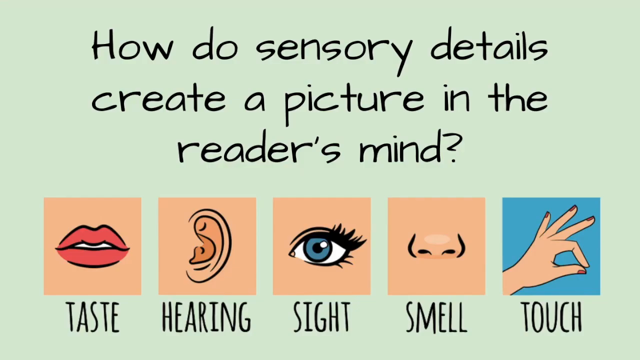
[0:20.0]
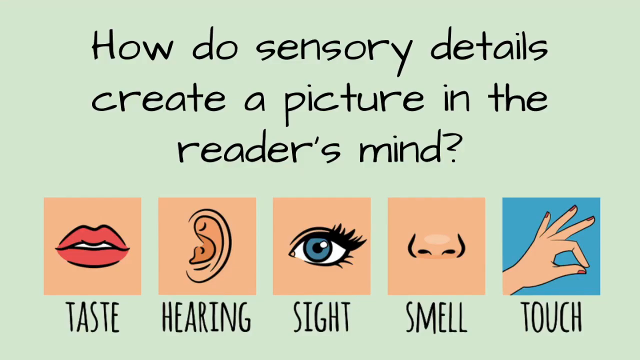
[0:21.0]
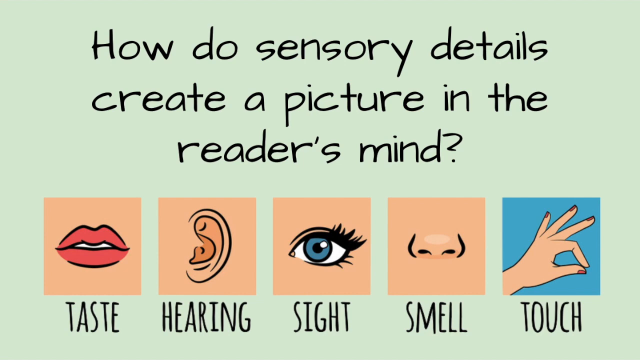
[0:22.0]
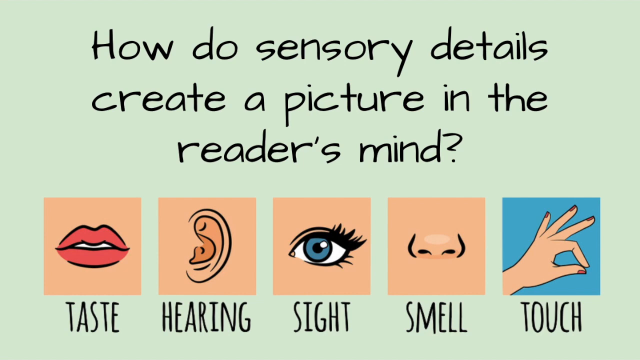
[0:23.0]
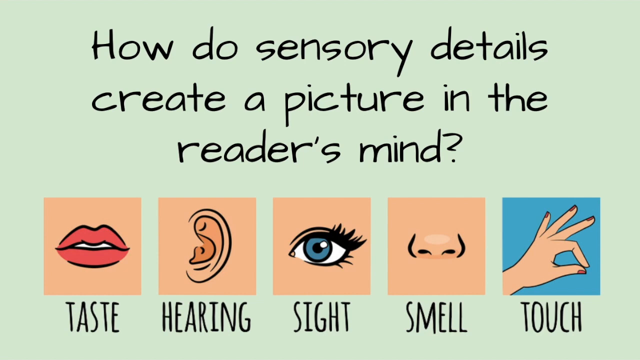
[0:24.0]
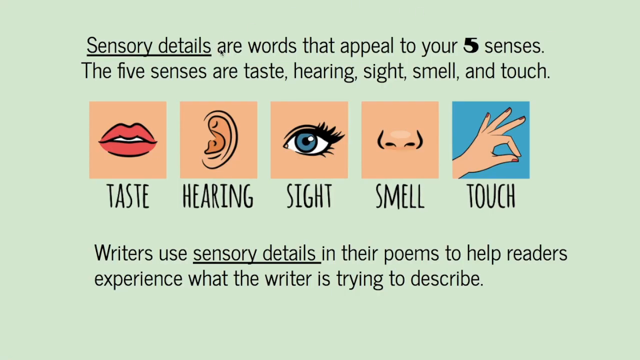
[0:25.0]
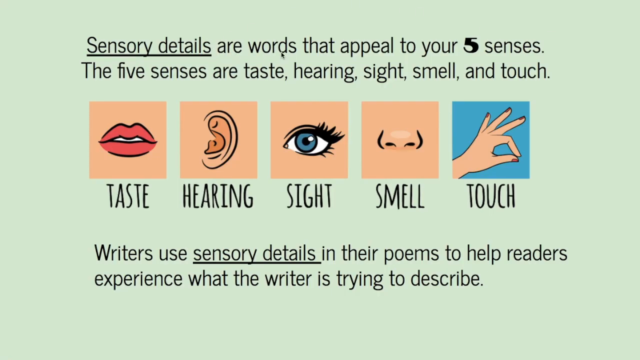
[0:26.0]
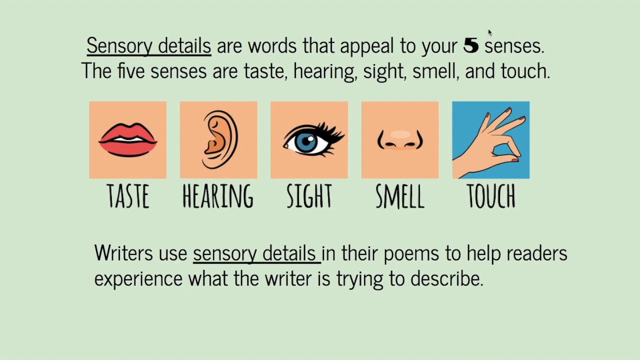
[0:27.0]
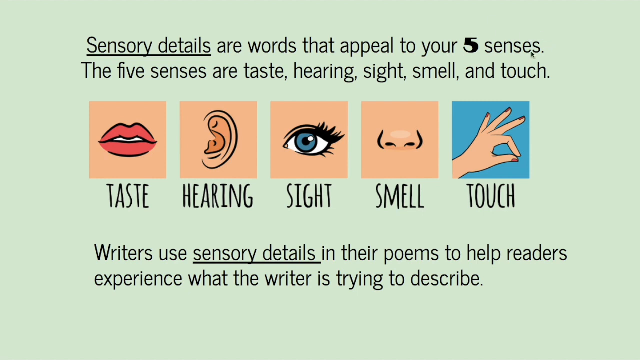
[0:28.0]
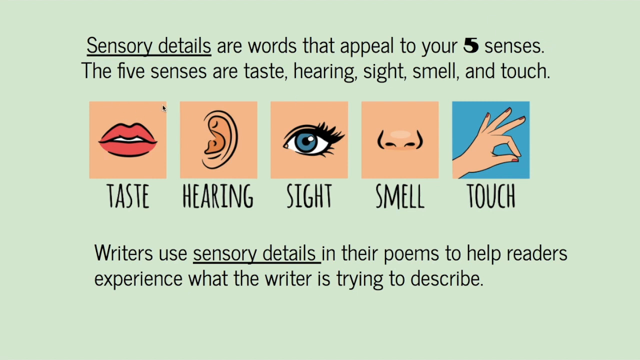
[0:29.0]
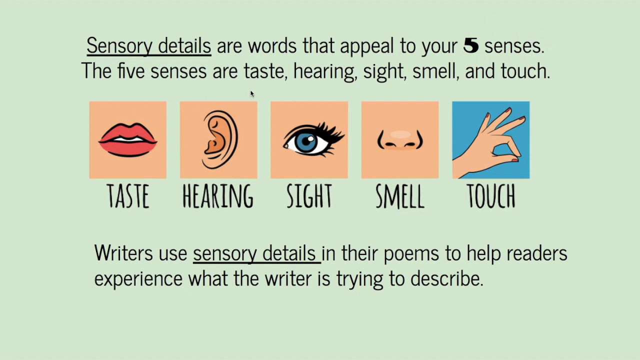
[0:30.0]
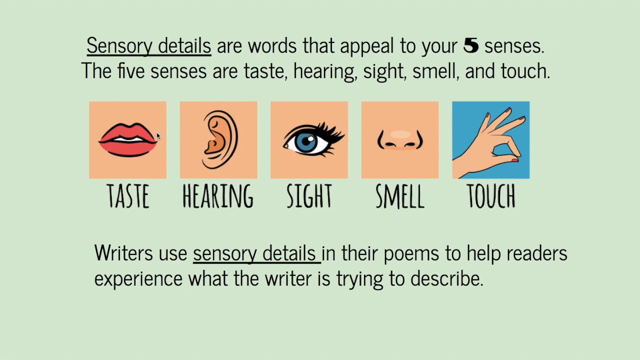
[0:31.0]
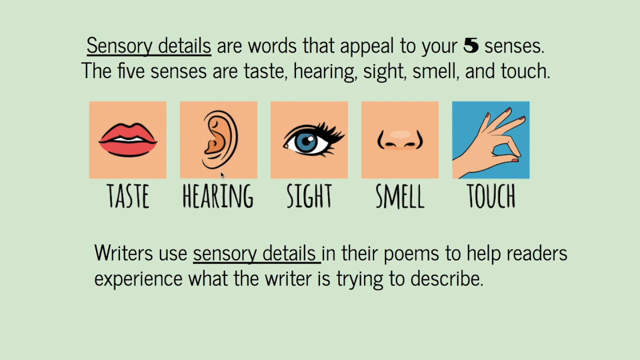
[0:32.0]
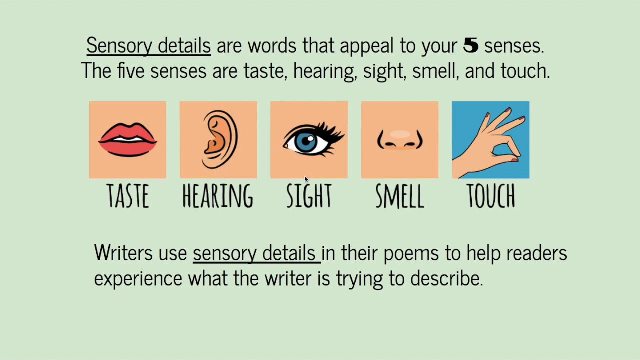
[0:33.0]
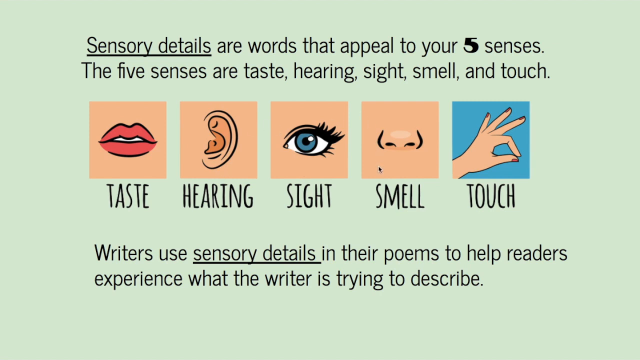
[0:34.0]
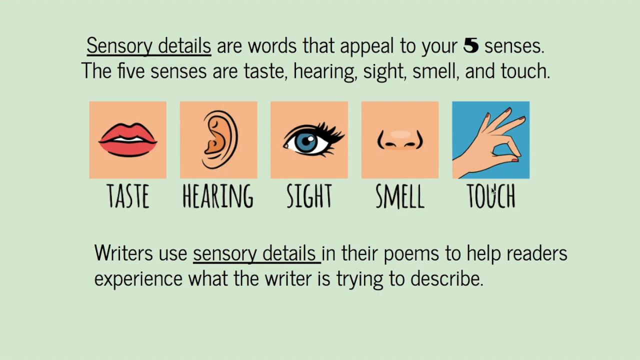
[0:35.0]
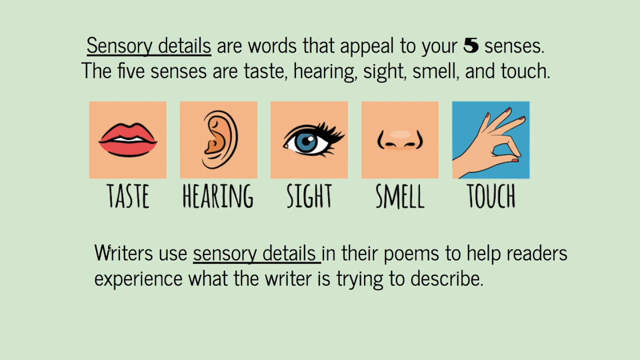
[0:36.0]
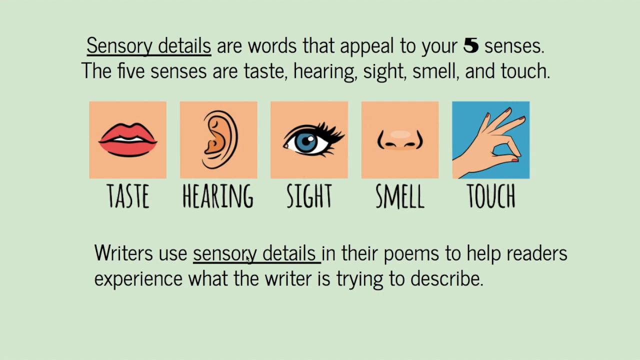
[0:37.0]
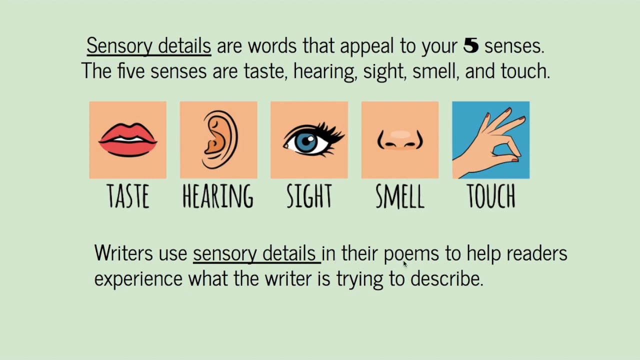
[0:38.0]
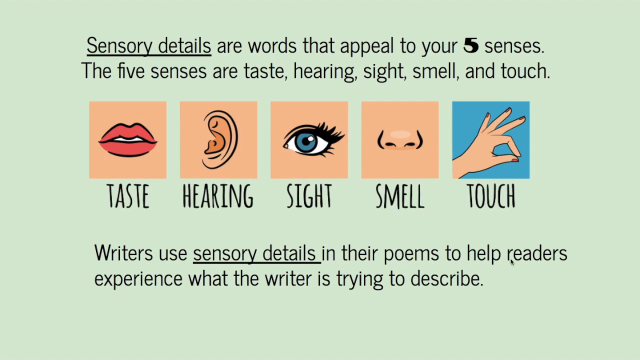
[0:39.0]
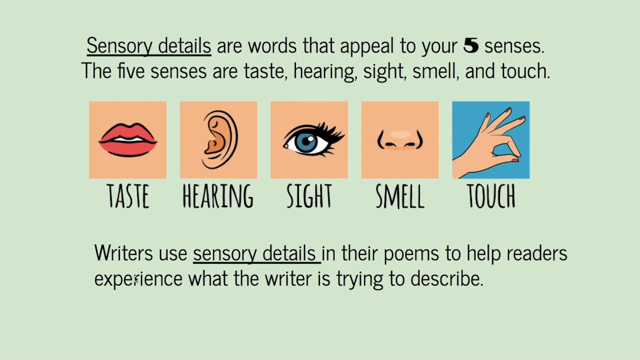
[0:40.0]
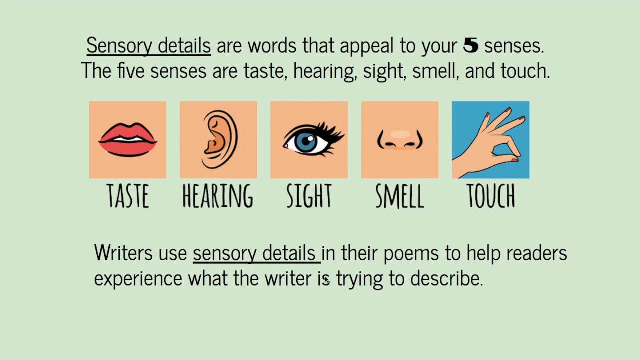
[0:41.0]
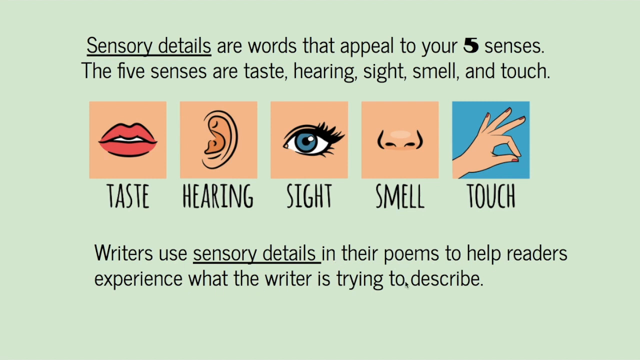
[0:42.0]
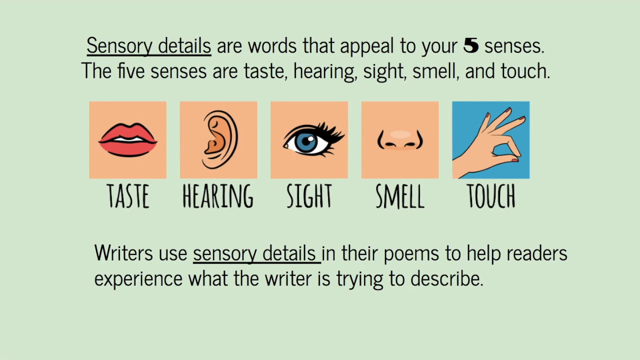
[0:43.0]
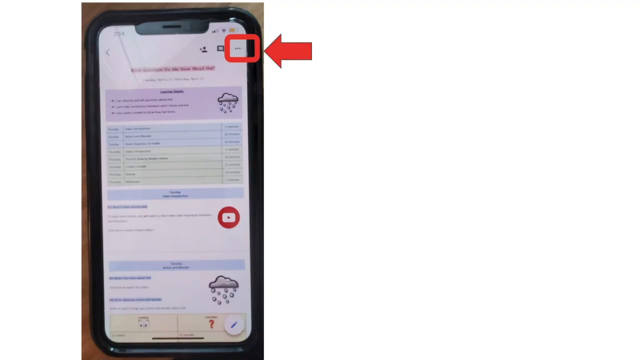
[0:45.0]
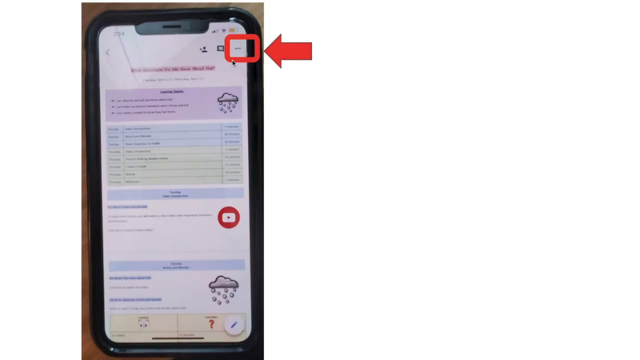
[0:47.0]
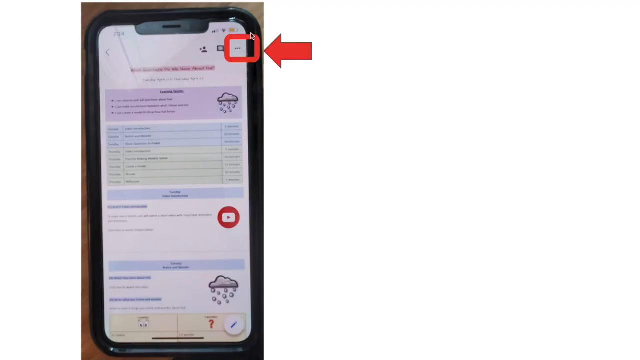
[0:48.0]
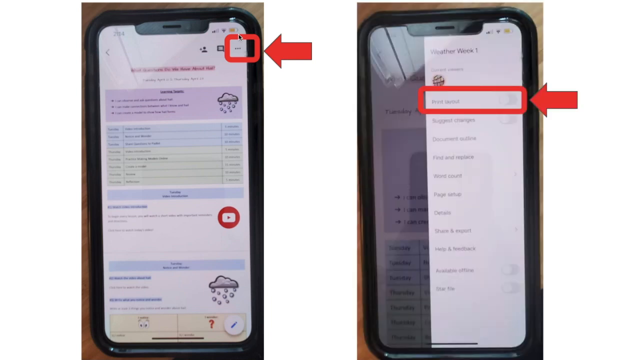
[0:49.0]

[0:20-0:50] The light green screen shows black text reading "how do sensory details create a picture in the reader's mind?" More text reads "taste, hearing, sight, smell, and touch," with lips, ears, eyes, nose, and hands each associated with one of them. The view transitions to a zoomed-out screen where more text is added to the page: "writers use sensory details in their poems to help readers experience what the writer is trying to say." The cursor kind of hovers around the page. The page then transitions to a mobile phone screen with a white background: a static image of a mobile phone open on some sort of web page, with some parts highlighted in red as the focus. No people or animals appear.